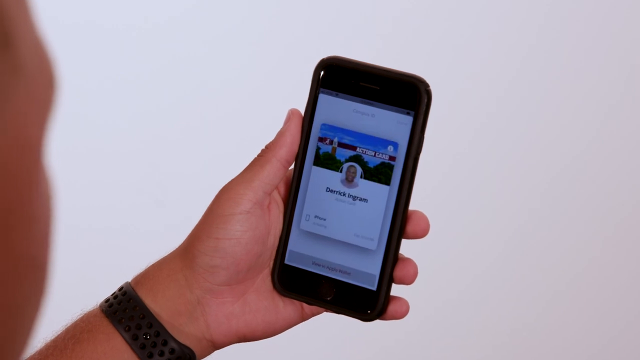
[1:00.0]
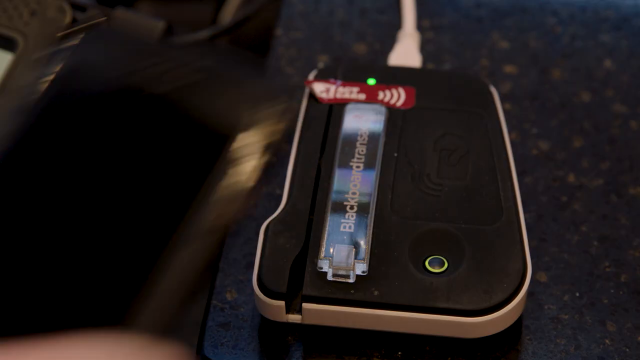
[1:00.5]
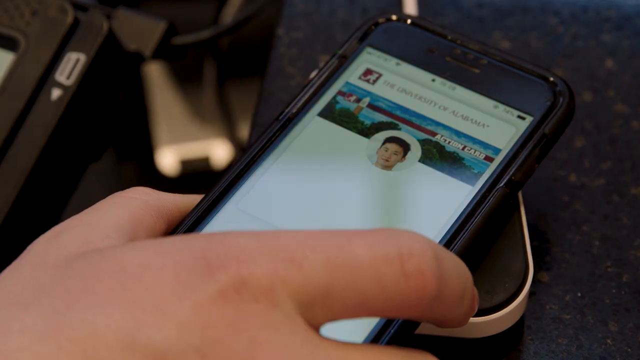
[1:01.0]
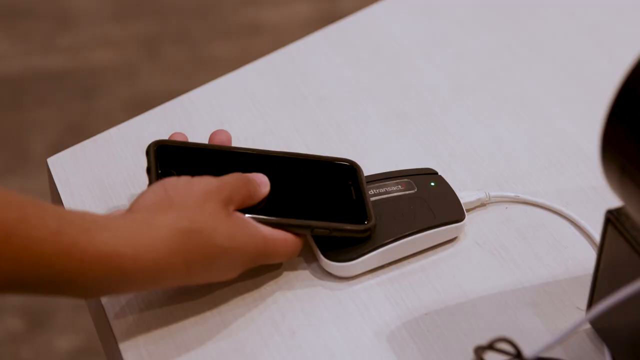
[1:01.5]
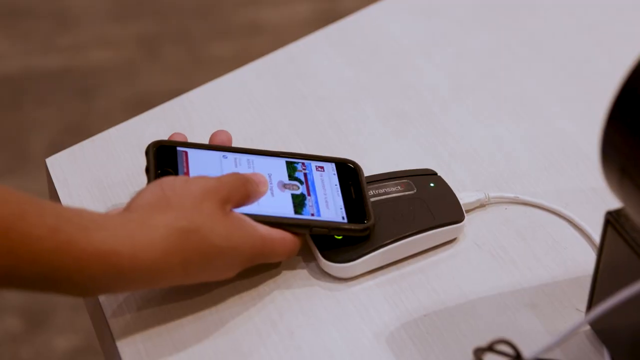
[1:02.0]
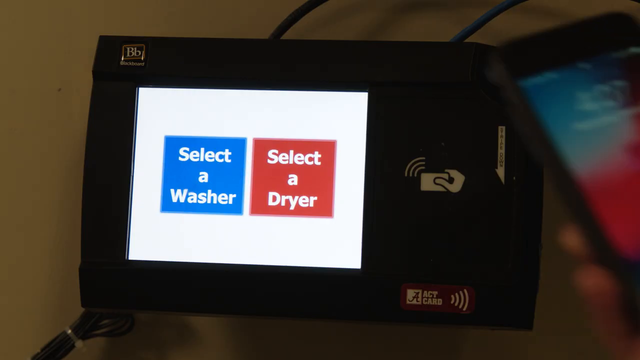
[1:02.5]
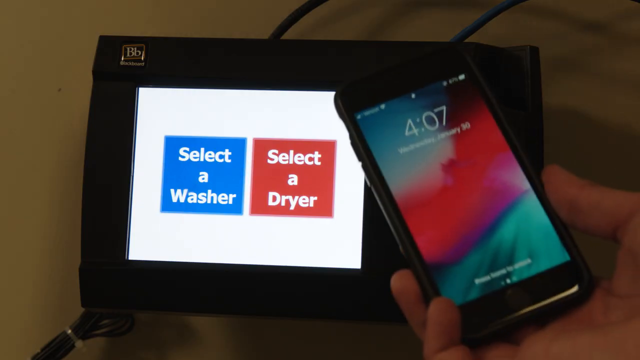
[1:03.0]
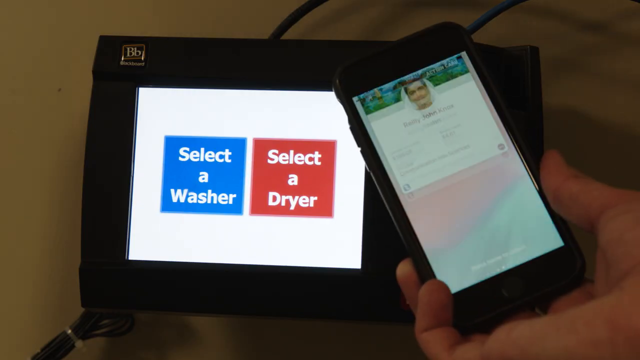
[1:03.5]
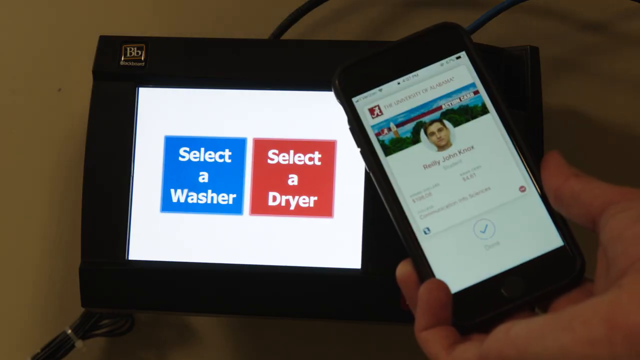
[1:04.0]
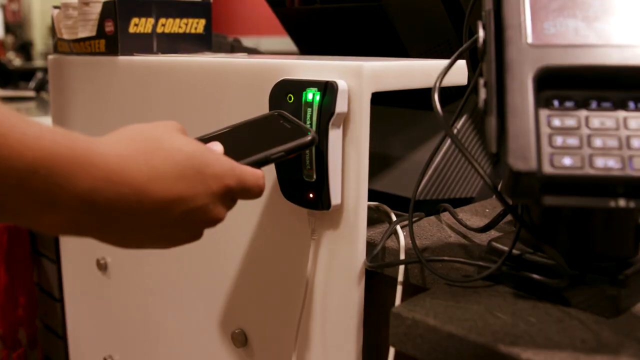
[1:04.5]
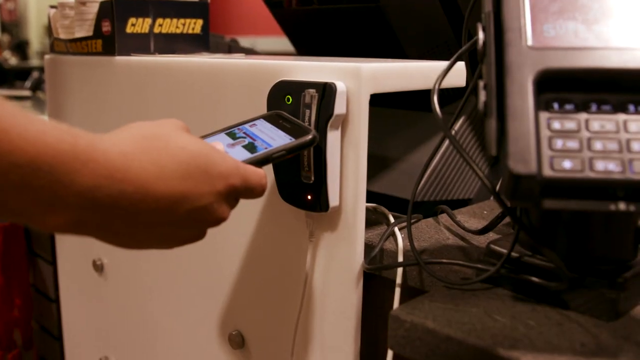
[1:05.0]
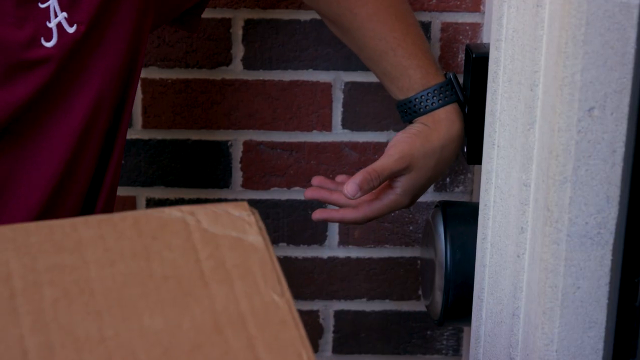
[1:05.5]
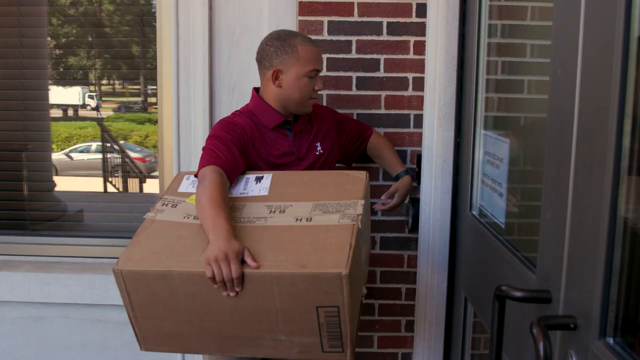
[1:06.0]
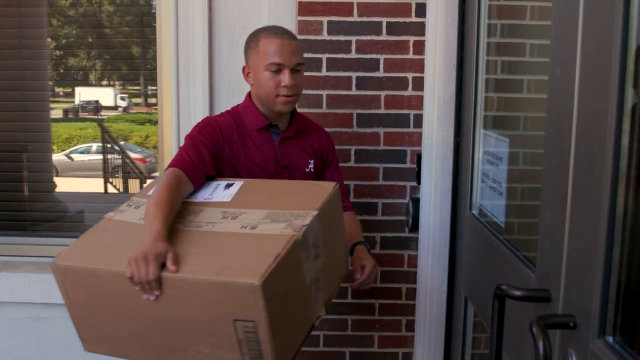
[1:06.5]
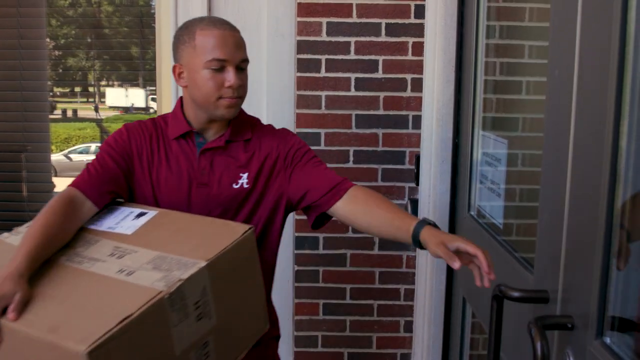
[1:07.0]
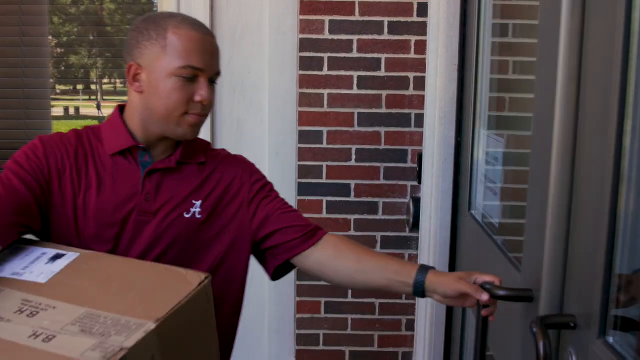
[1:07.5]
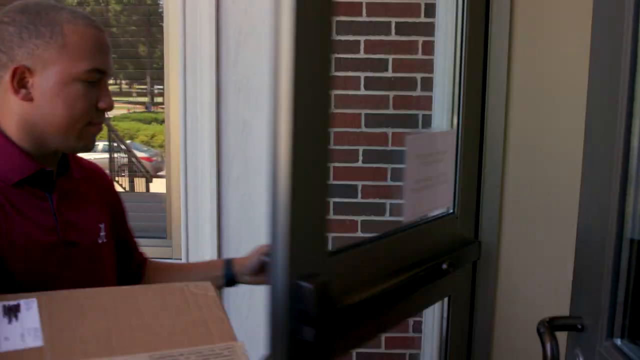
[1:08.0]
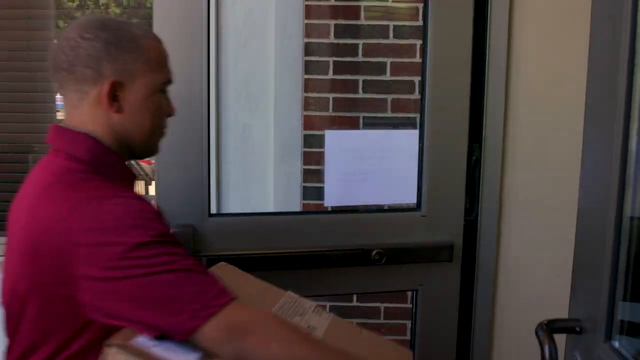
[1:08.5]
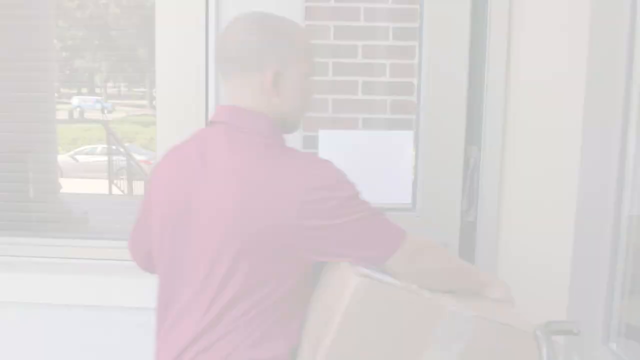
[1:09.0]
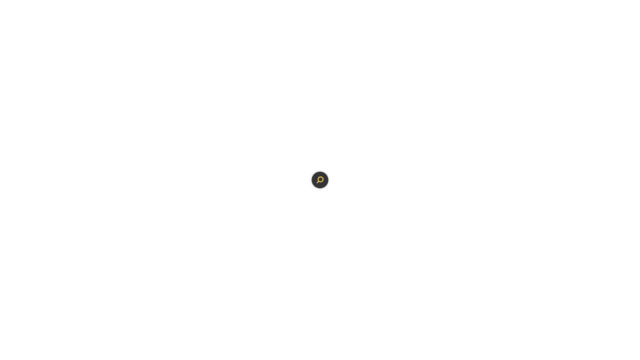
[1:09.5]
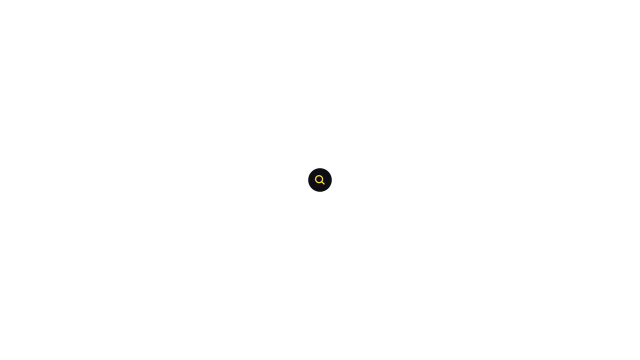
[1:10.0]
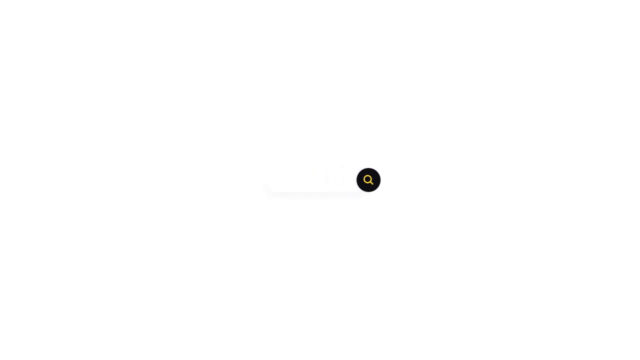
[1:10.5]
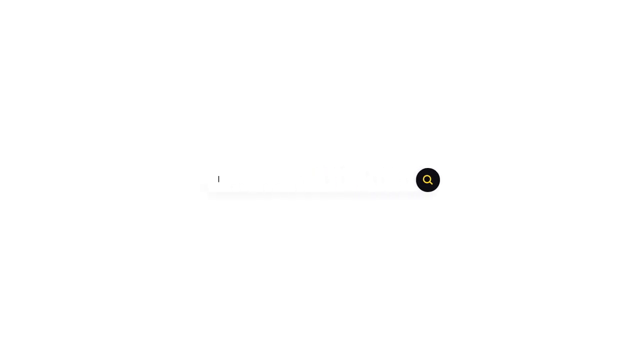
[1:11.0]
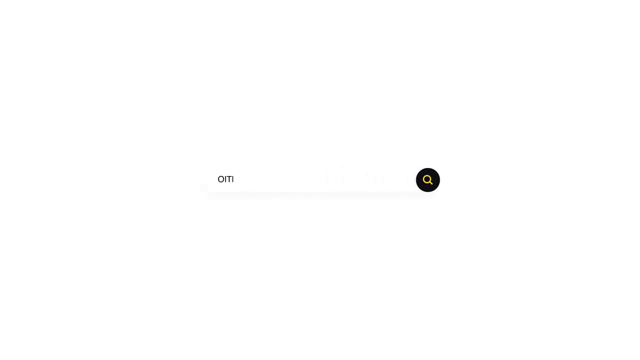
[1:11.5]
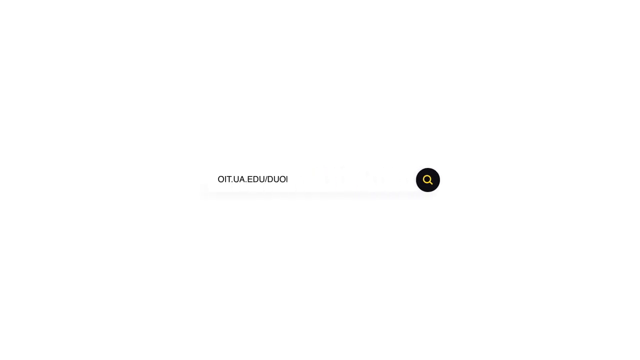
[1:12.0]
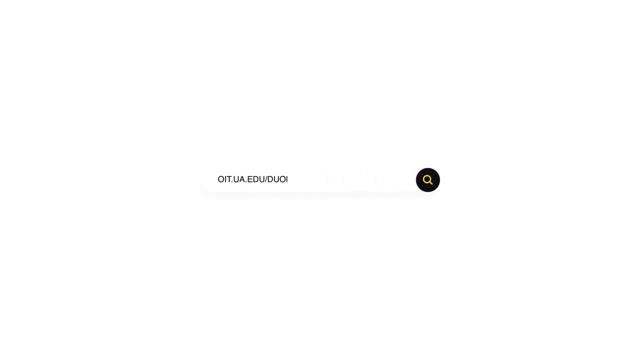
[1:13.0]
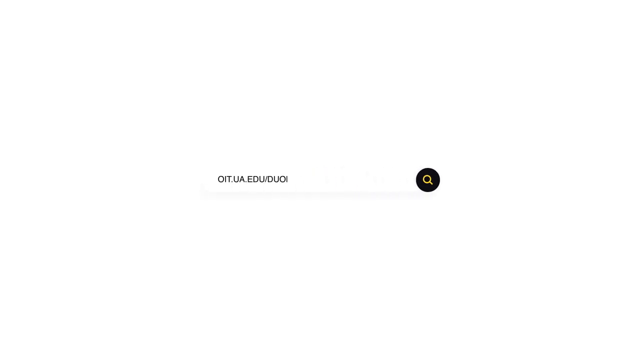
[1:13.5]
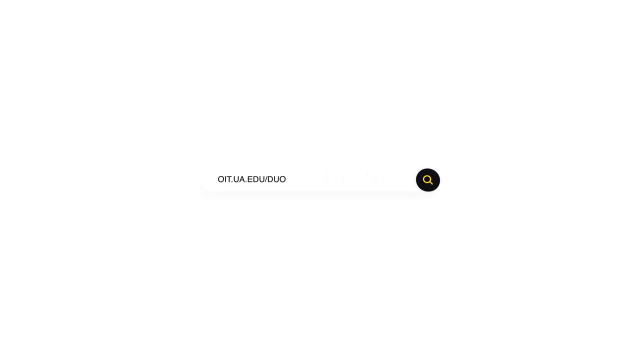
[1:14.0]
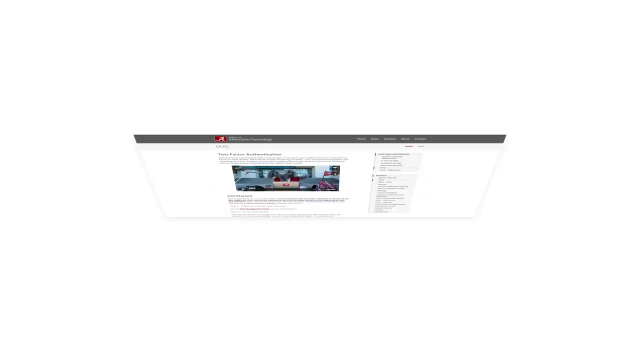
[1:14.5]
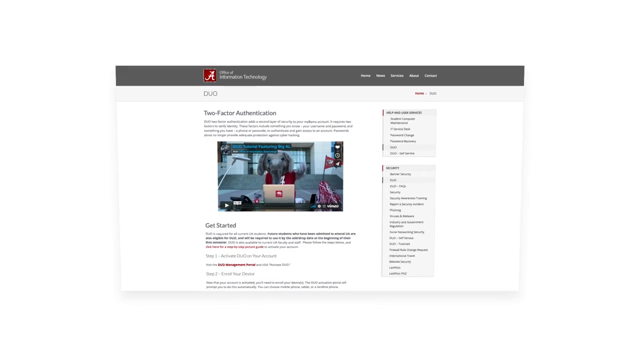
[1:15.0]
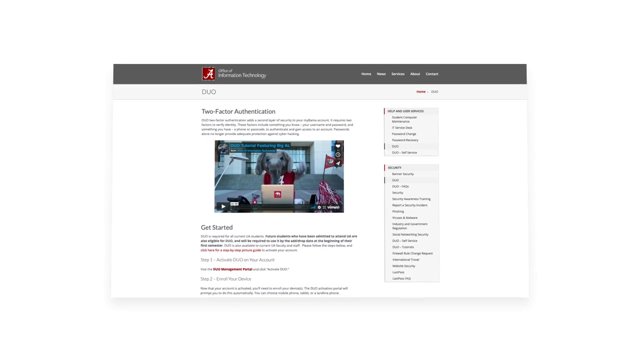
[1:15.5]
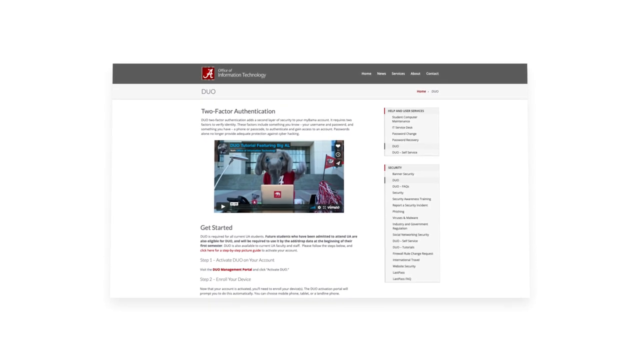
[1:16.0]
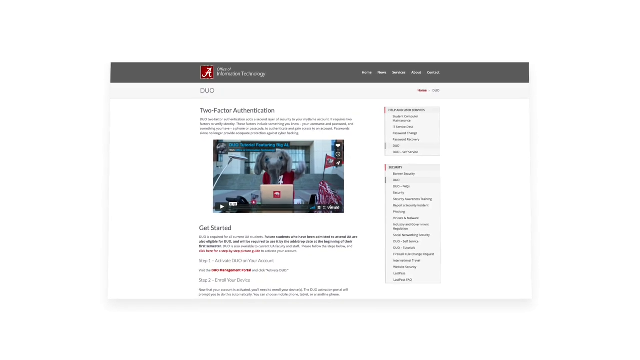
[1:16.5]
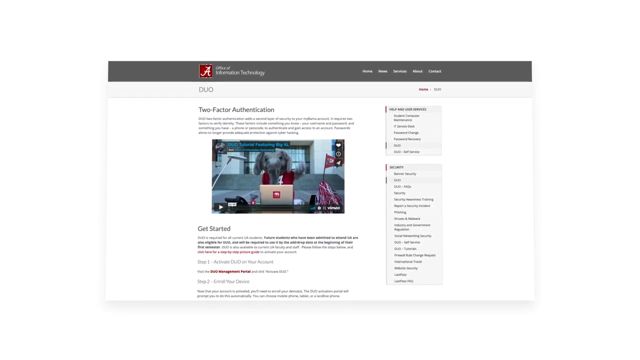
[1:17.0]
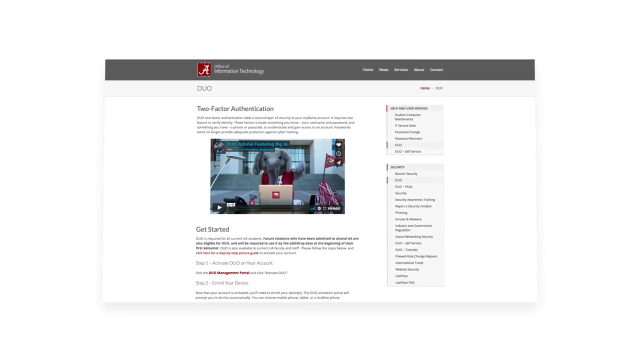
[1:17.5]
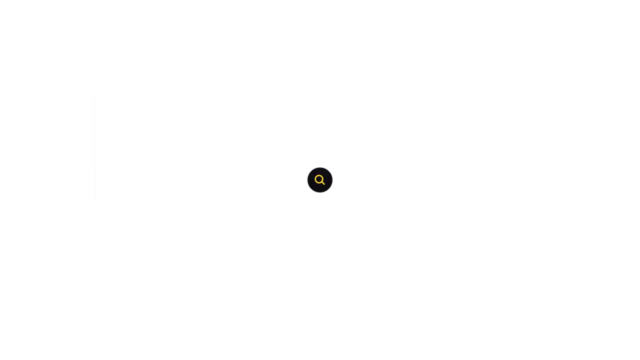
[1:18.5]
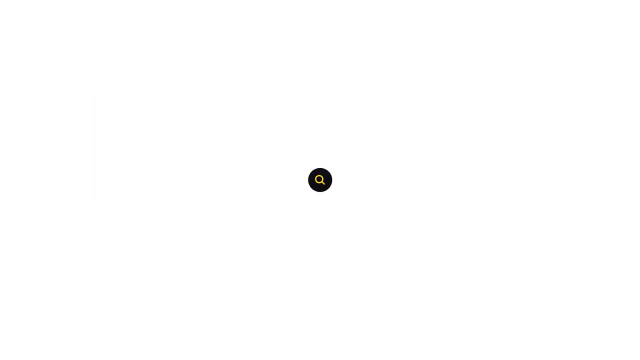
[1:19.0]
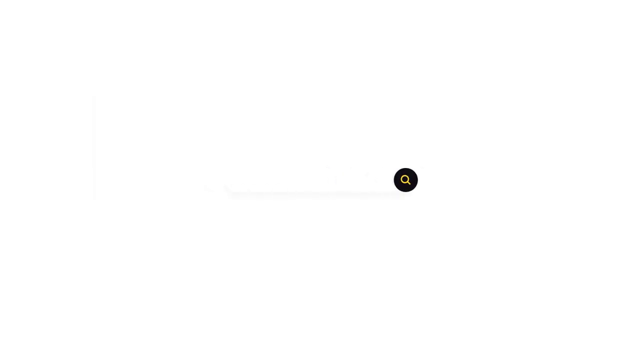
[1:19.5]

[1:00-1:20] The person takes their own photo using the front-facing camera on their phone. A succession of places follows where access is gained: at a table, at another table, and at a dryer and a washer, indicating that one could wash and dry clothes at a communal space using it. Access is then gained to a white box that almost looks like a refrigerator, but lots of tech is seen on the other side, so it might actually be a computer case. Next, another person, like a delivery person, wearing a red polo with an Alabama logo, accesses what is possibly a communal building with a big brown box in their hand. A white background follows with some digital elements and some text, then another web page, more text, and a search icon: a white looking glass in a black circle.